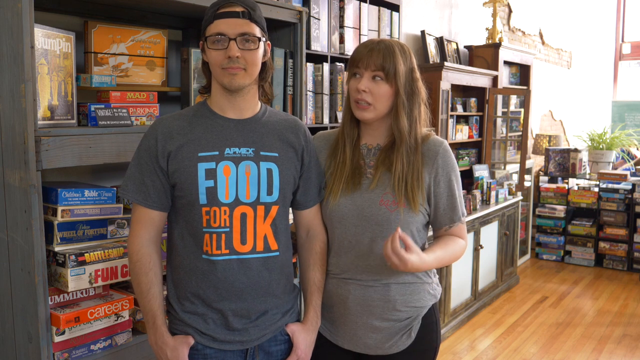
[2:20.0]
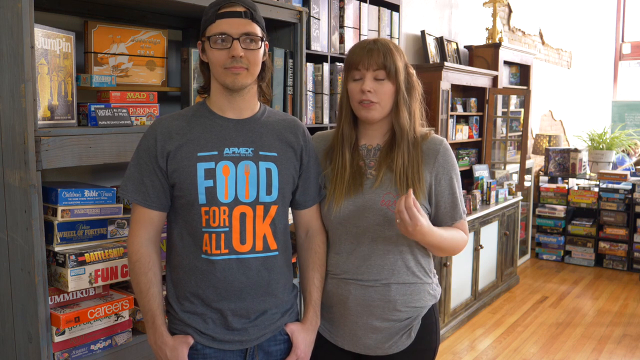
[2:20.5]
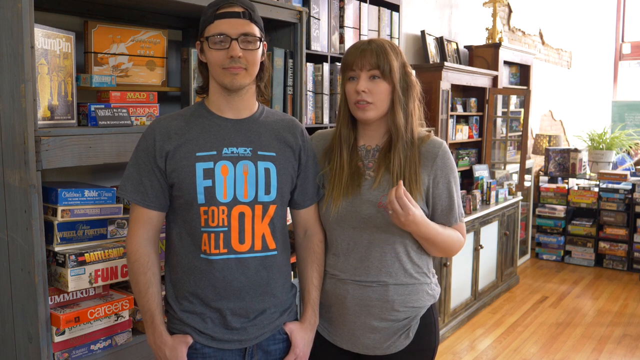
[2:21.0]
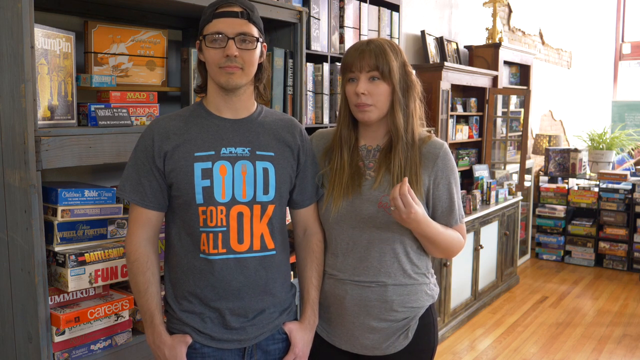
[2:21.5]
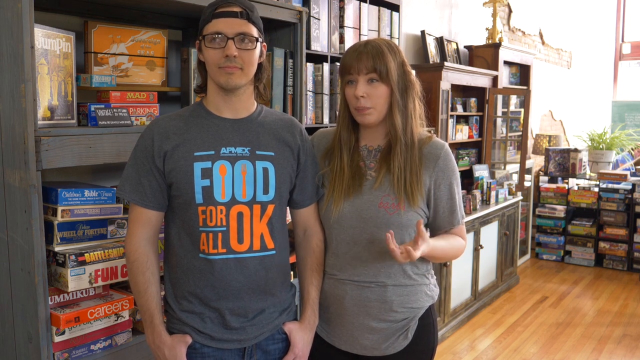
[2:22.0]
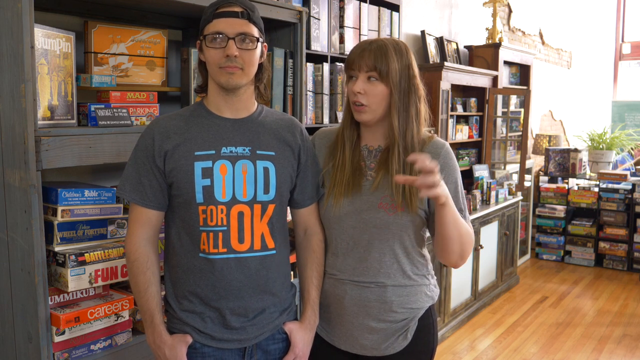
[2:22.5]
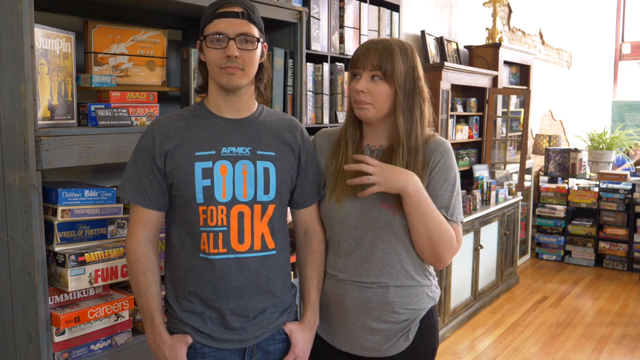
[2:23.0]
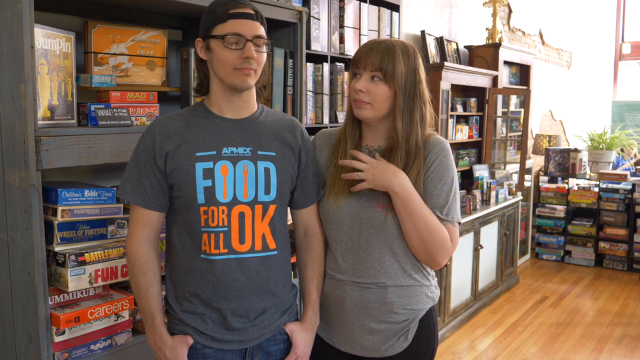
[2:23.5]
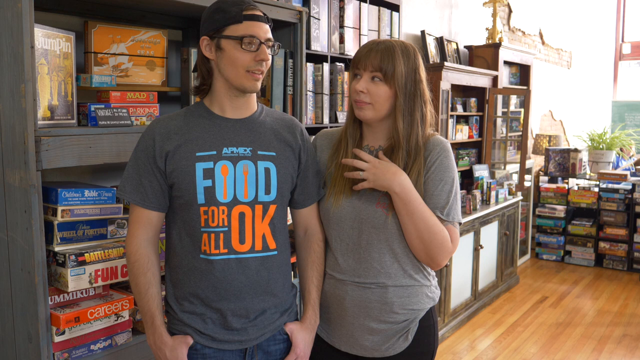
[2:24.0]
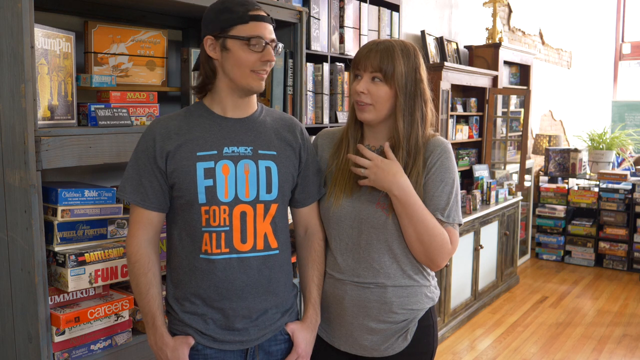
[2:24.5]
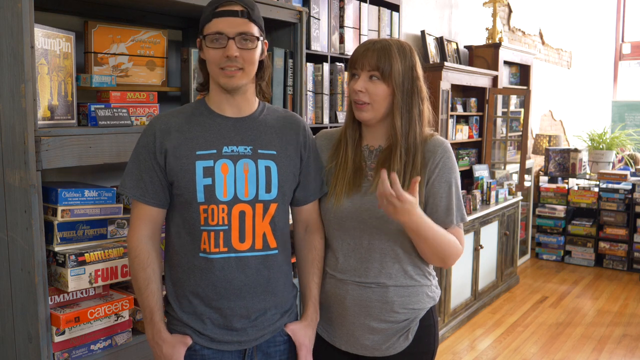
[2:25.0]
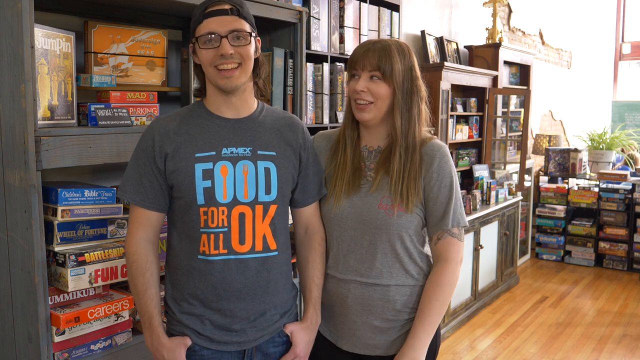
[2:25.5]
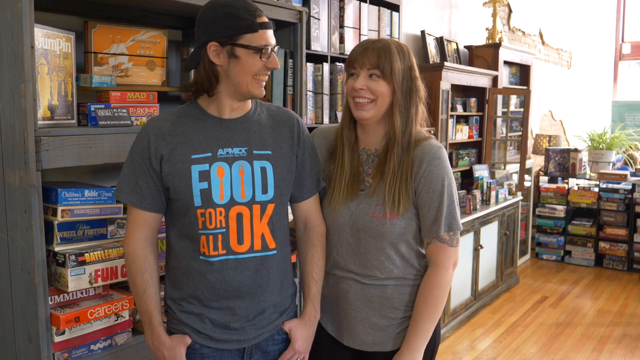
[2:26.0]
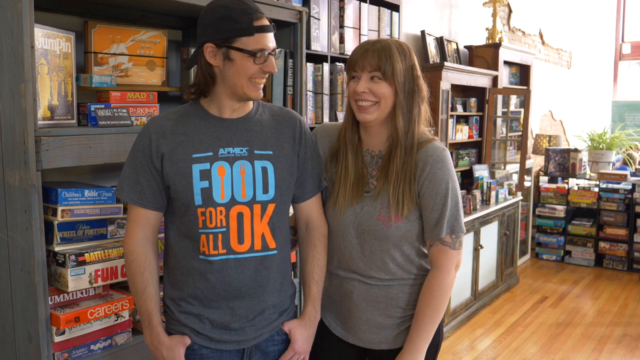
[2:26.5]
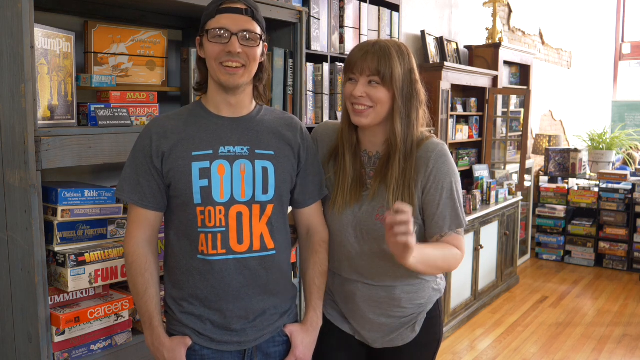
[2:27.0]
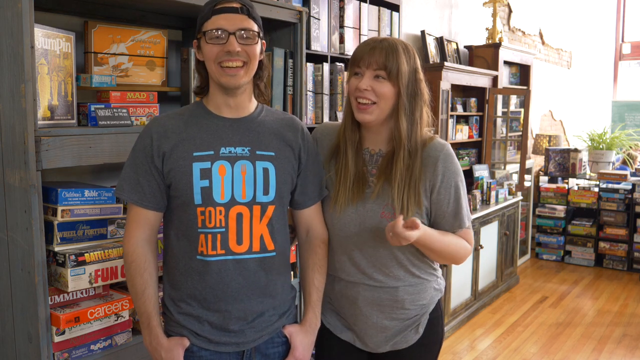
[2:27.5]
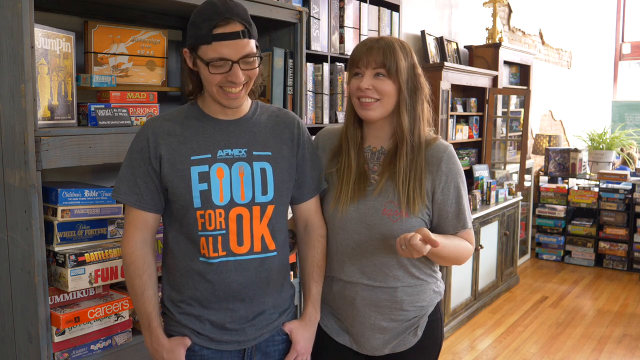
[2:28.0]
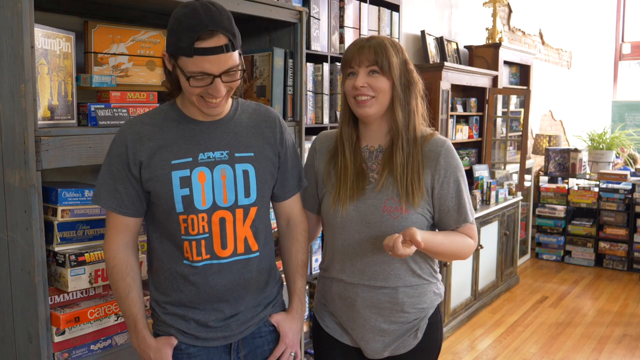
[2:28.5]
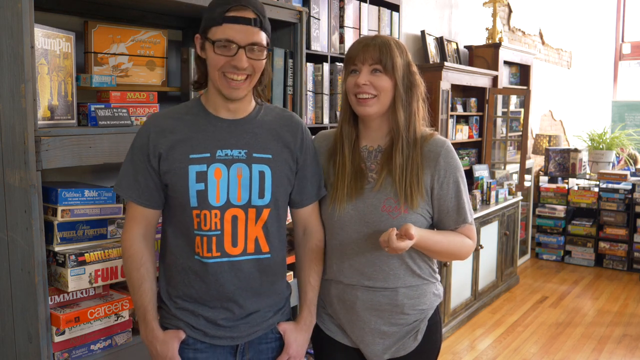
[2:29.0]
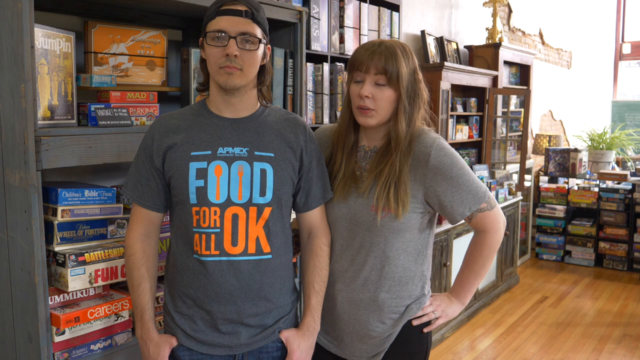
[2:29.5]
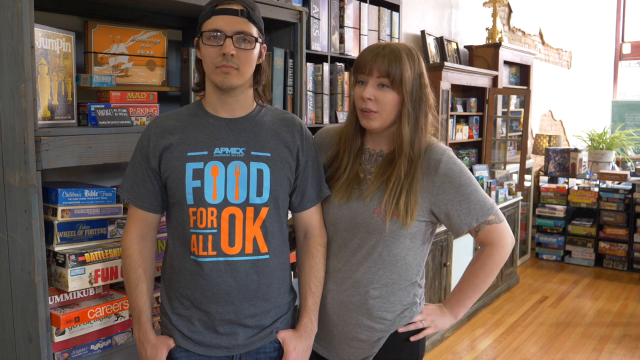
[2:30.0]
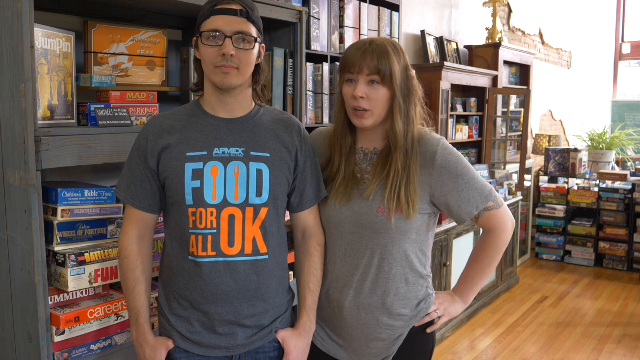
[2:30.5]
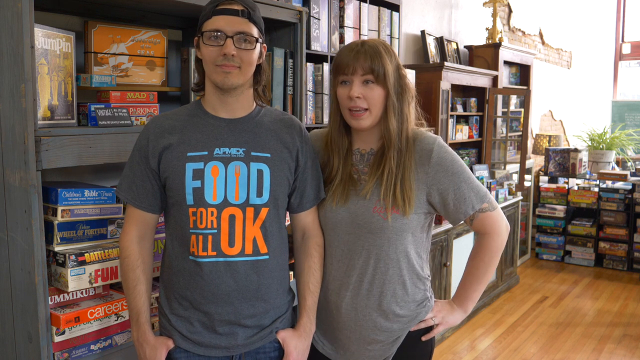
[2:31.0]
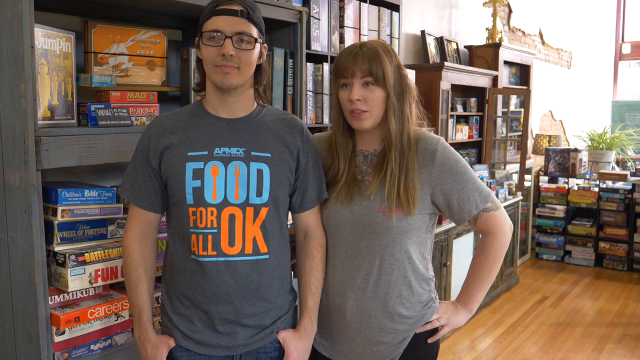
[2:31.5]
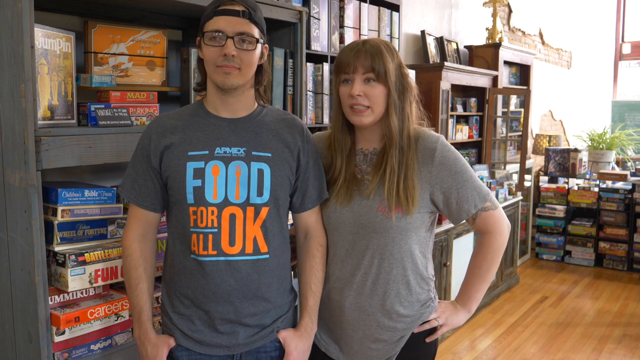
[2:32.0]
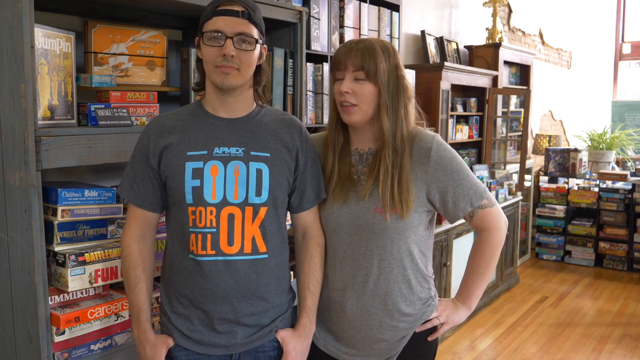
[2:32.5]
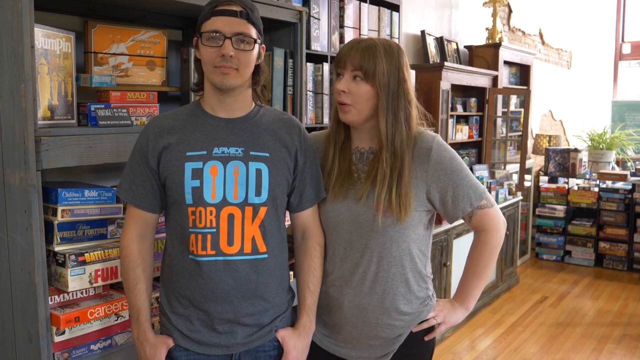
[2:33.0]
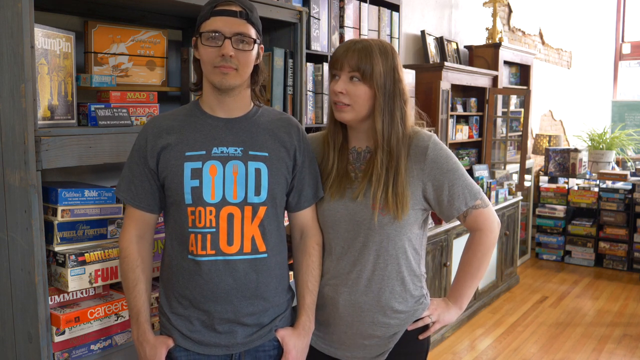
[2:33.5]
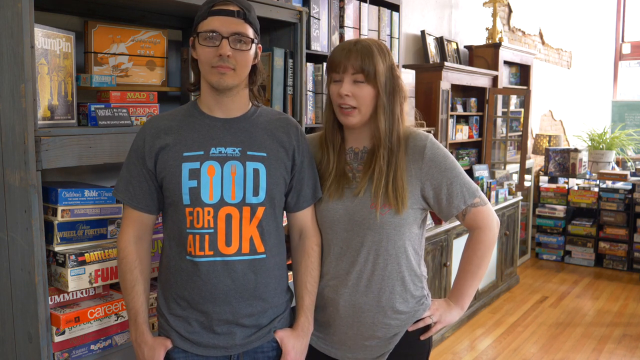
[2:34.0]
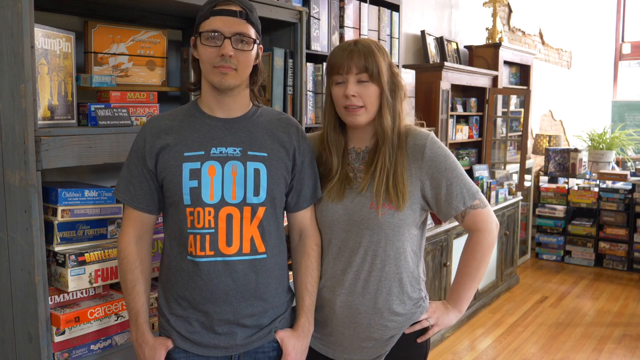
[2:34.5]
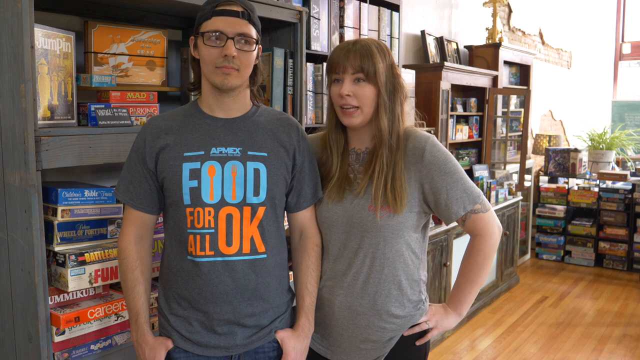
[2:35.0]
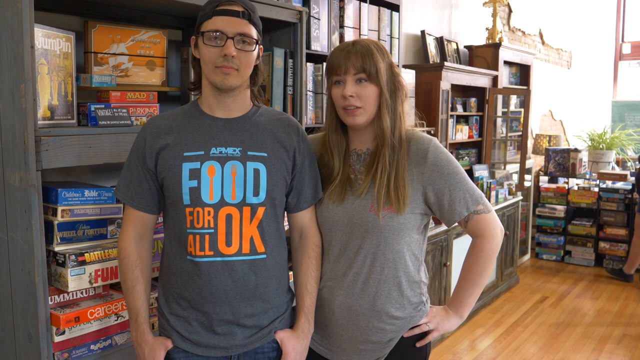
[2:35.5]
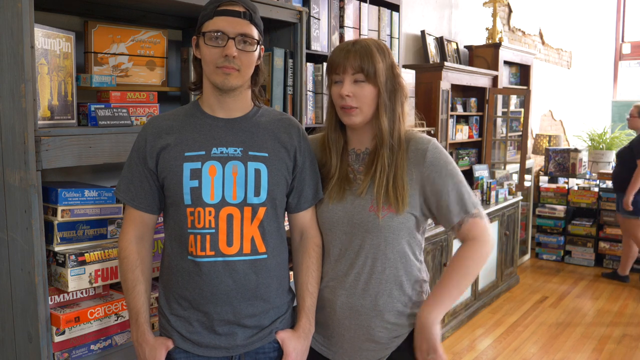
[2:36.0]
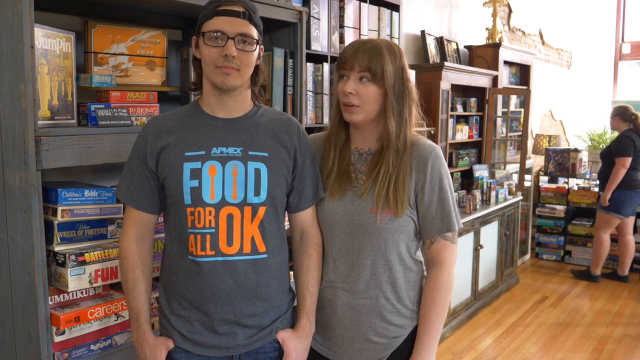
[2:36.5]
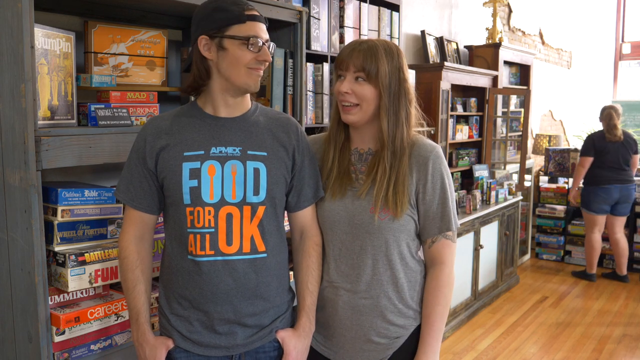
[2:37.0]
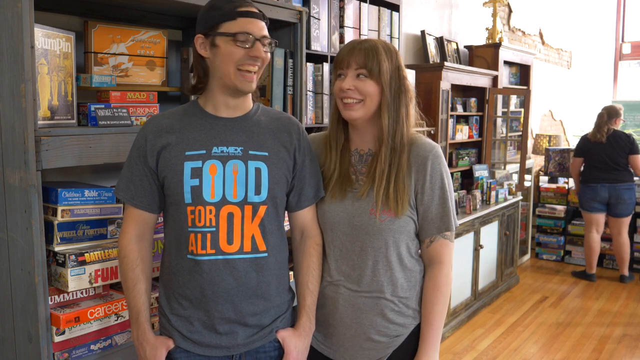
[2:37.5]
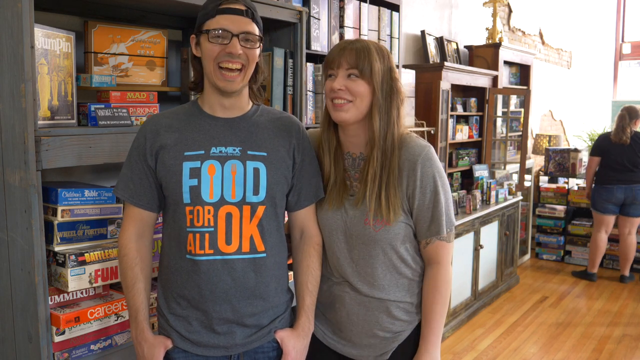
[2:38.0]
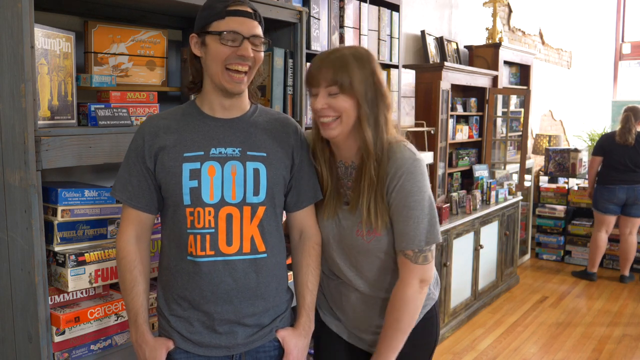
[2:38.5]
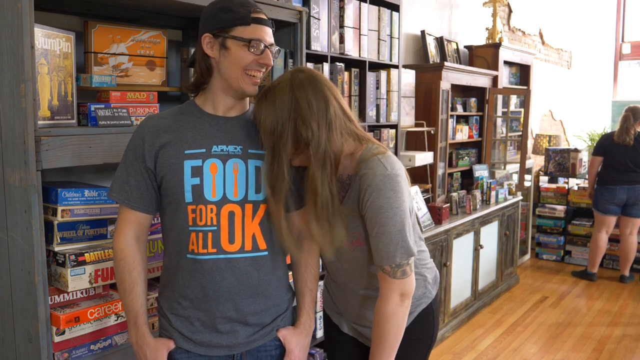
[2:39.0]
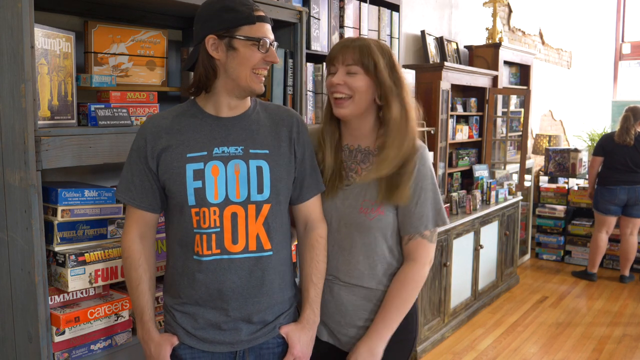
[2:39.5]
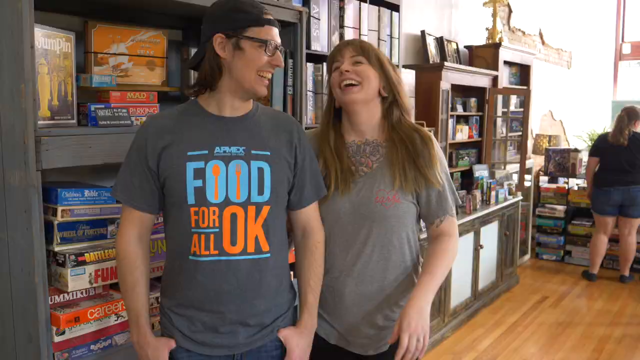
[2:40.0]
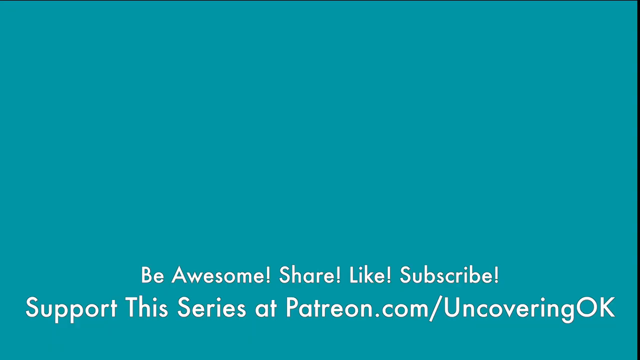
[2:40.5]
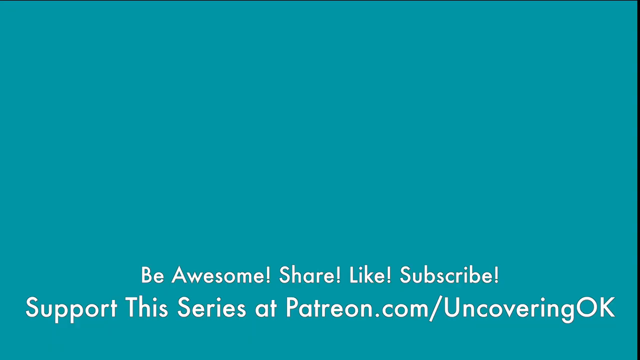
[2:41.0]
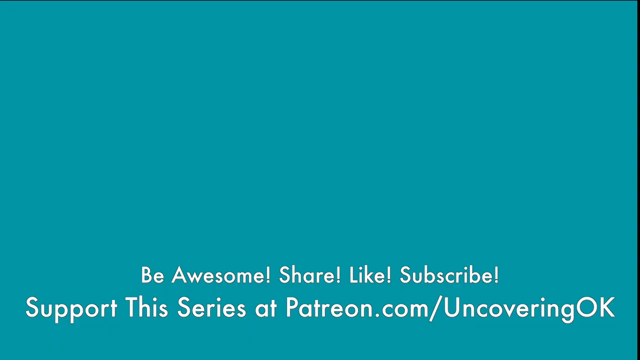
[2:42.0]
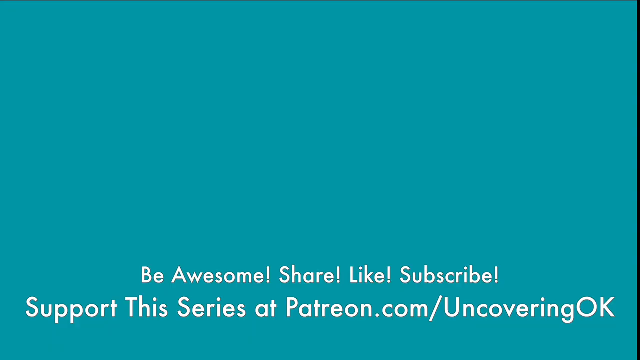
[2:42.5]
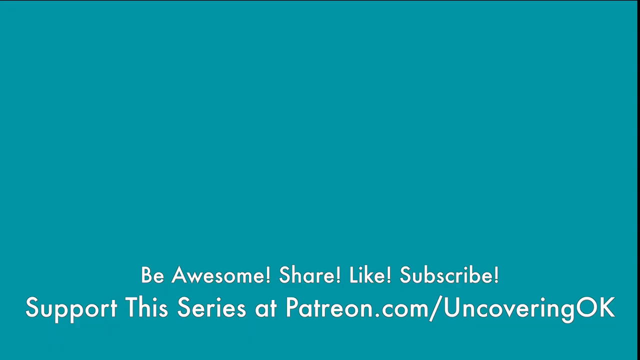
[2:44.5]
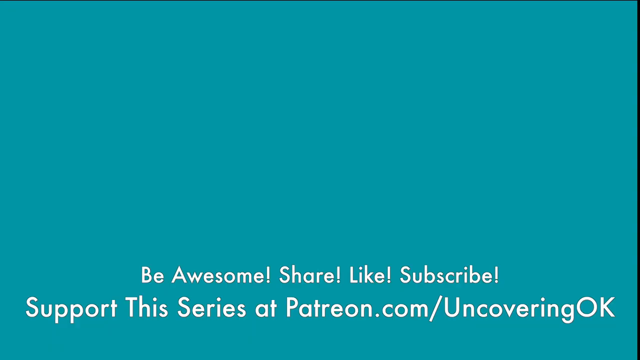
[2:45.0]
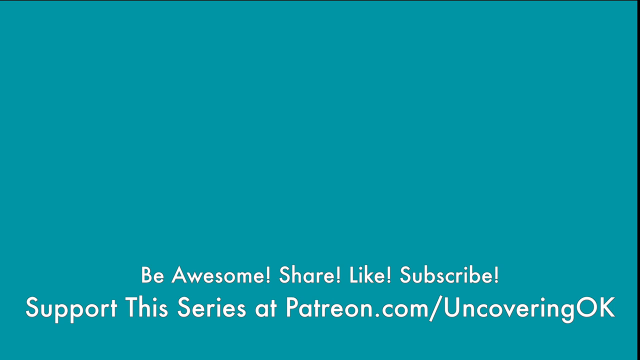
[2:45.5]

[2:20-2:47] The woman and man, the owner and worker of the gaming house, stand in front of a grayish wooden bookshelf with board games stacked on it. The woman looks at the man briefly as she speaks, holding her hands in a thinking or point-making gesture, then quickly releases her fingertips, drops her hand briefly, and raises it back toward her chest. She keeps looking at the man with her hand up; he glances over and away, then notices her staring and looks back, smiles, begins to speak and shrugs as they both laugh. Her hand drops to her side, then she raises her left hand again with the thumb extended and palm facing up. The man looks down at the floor with both hands in his pockets, still laughing, while the woman continues smiling and speaking.